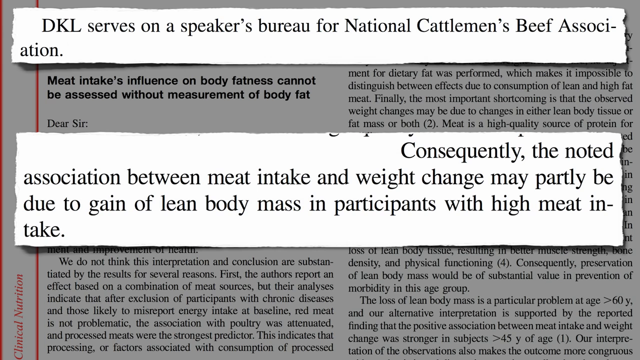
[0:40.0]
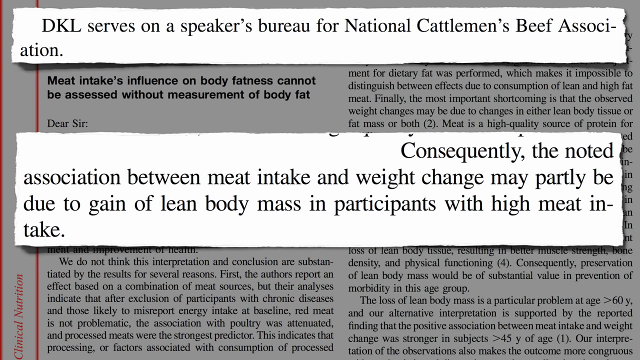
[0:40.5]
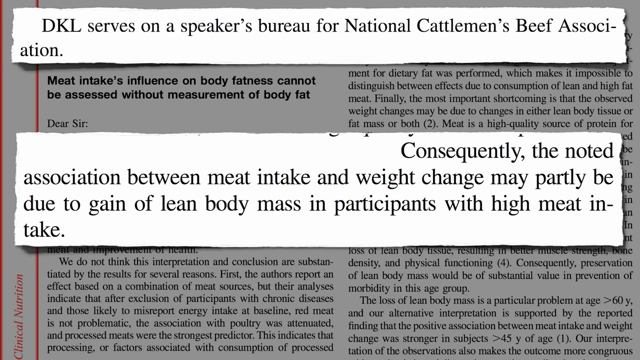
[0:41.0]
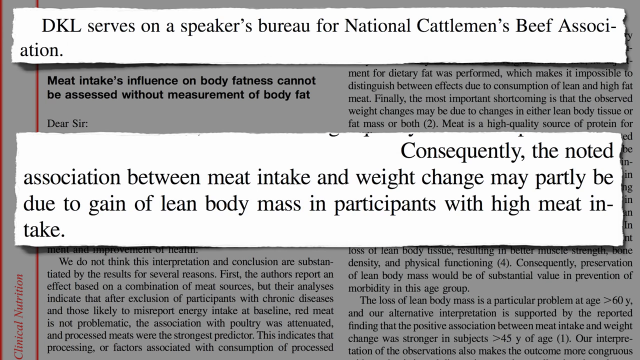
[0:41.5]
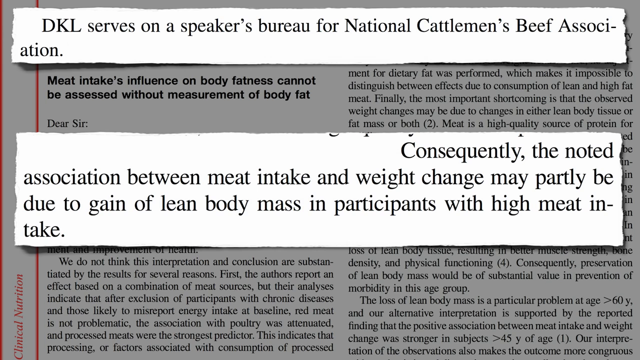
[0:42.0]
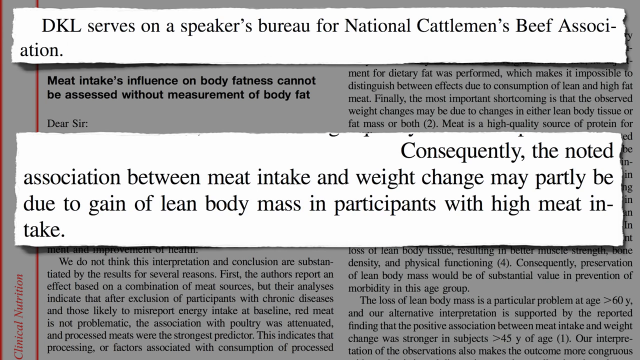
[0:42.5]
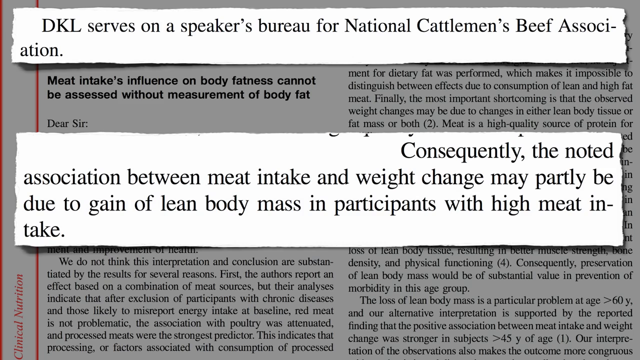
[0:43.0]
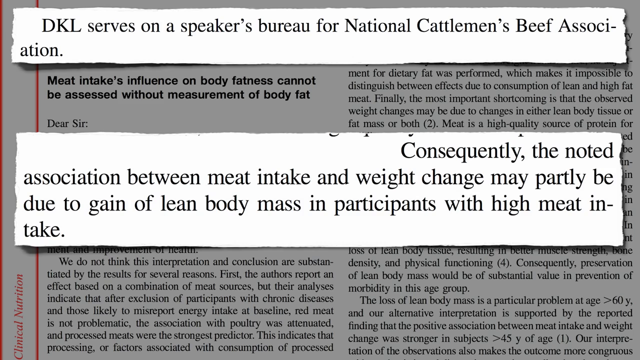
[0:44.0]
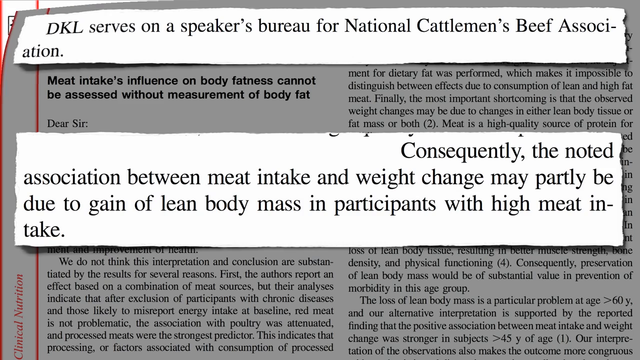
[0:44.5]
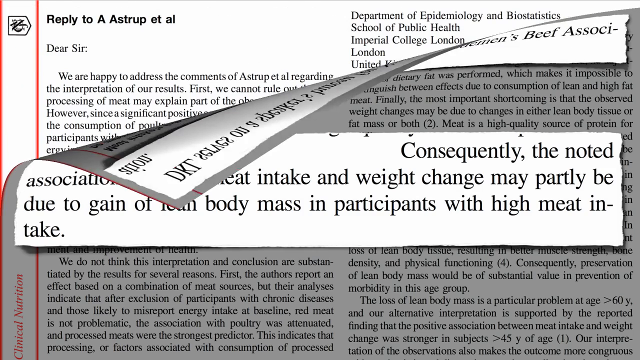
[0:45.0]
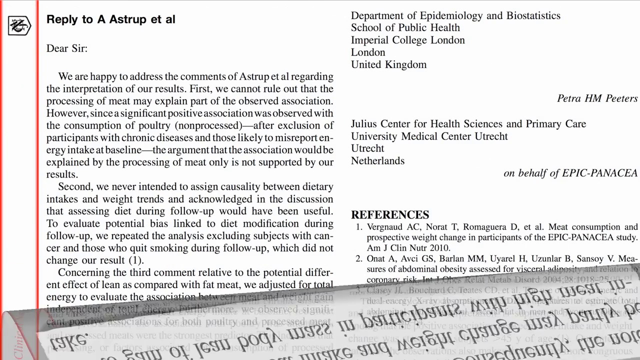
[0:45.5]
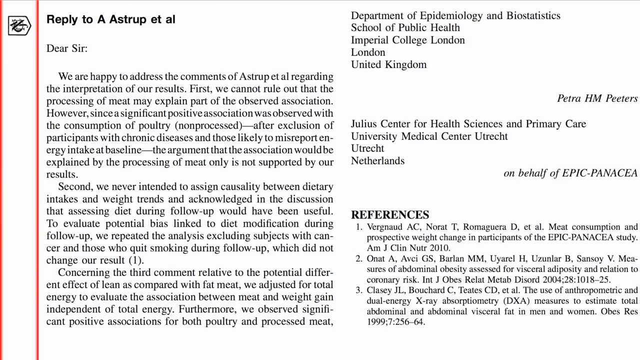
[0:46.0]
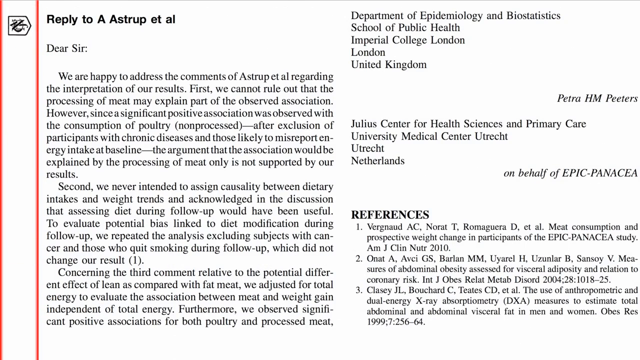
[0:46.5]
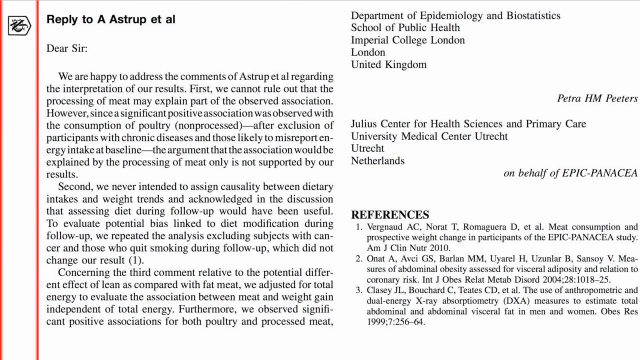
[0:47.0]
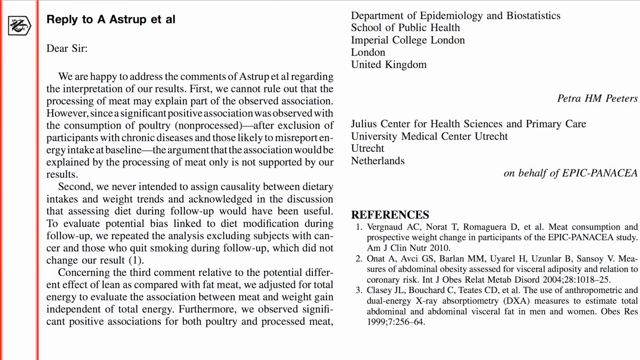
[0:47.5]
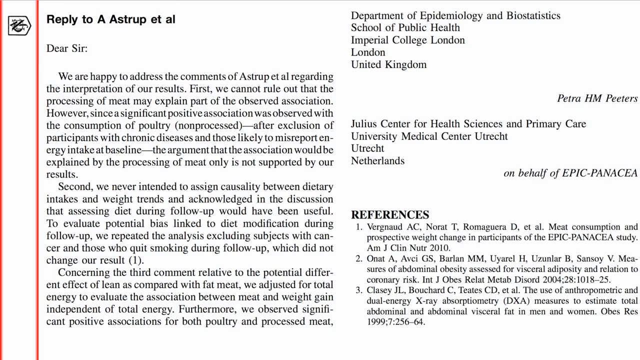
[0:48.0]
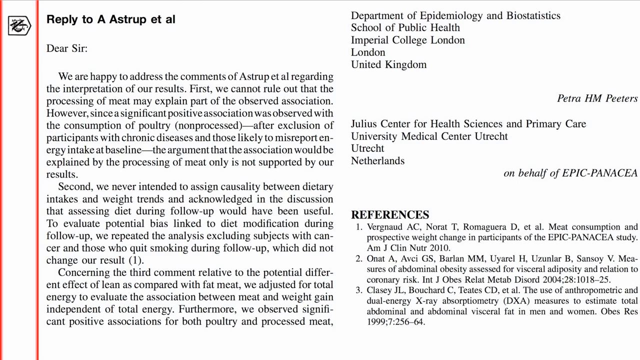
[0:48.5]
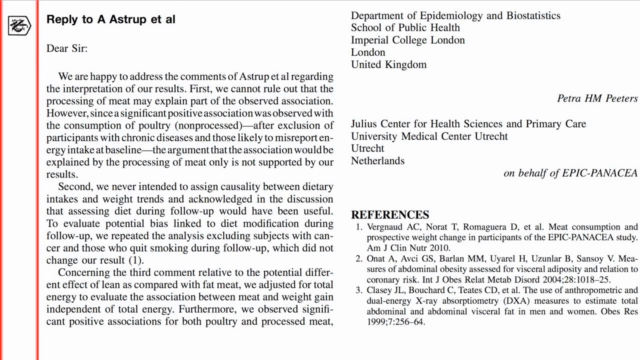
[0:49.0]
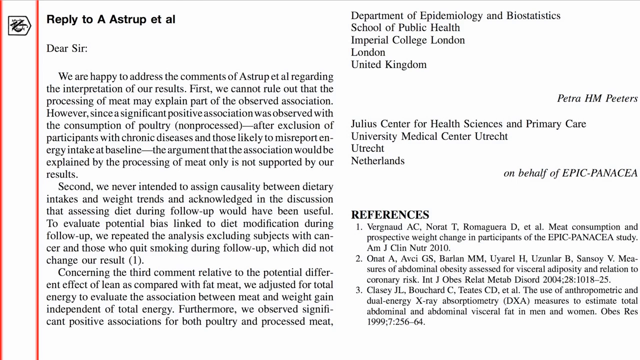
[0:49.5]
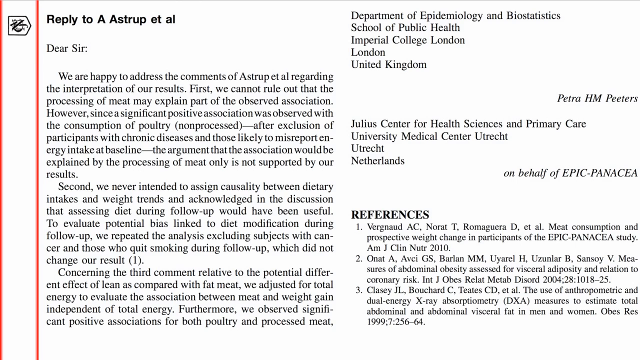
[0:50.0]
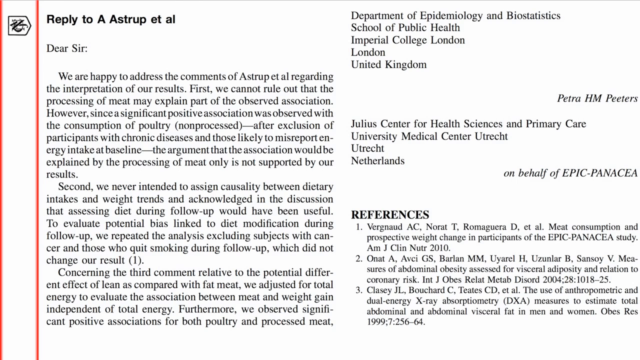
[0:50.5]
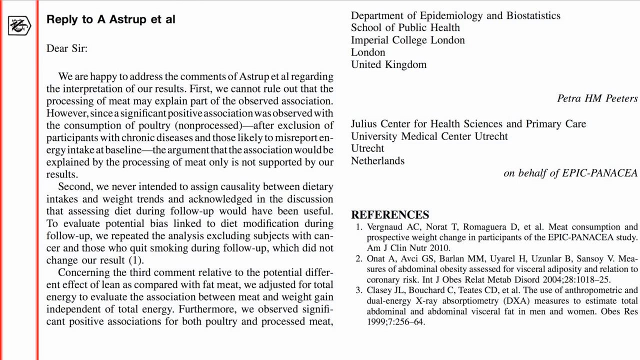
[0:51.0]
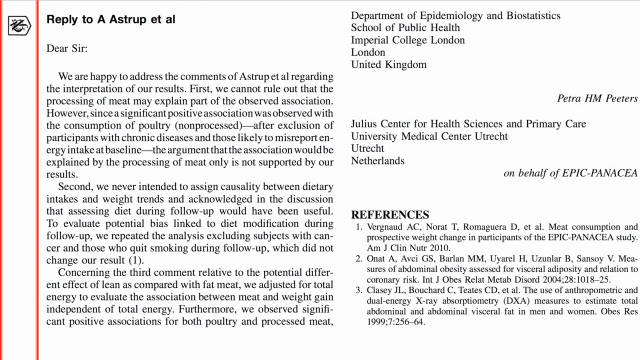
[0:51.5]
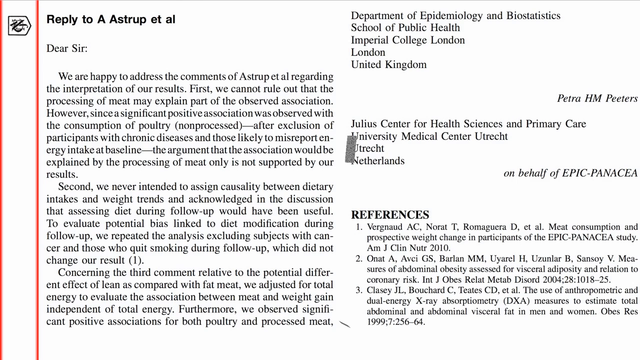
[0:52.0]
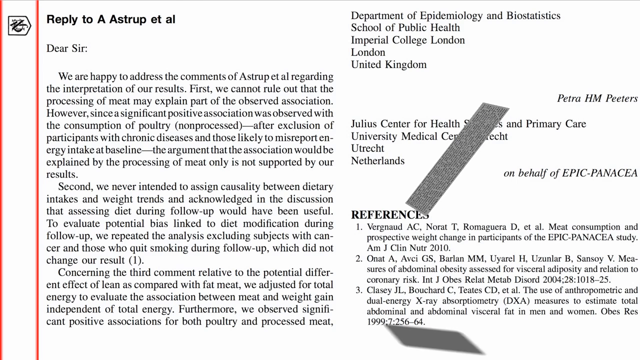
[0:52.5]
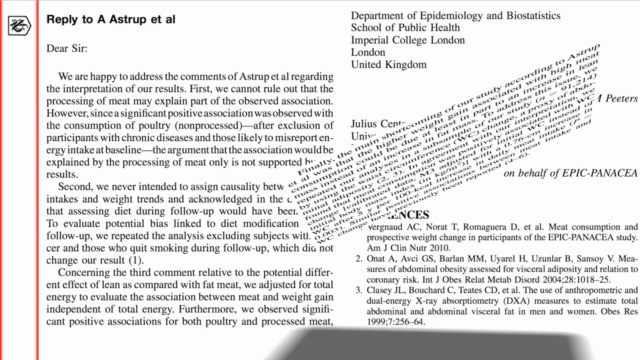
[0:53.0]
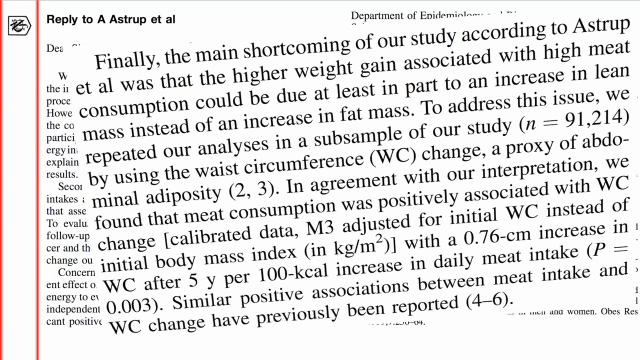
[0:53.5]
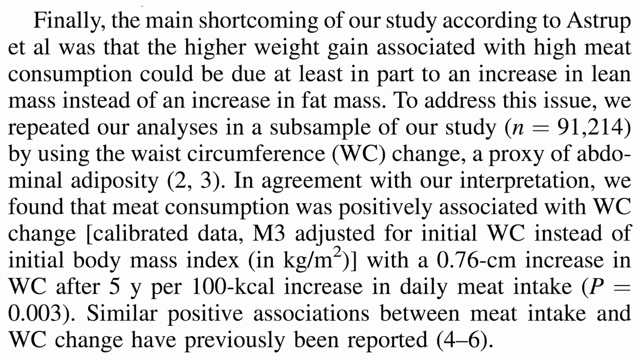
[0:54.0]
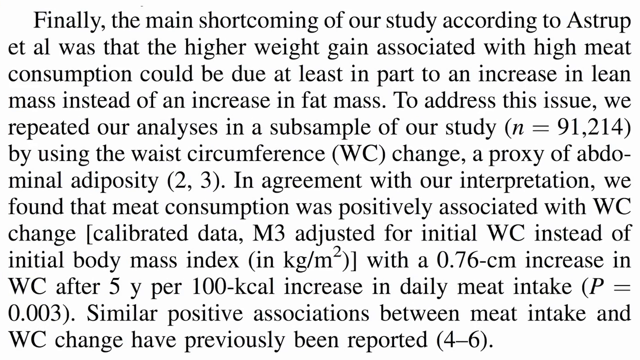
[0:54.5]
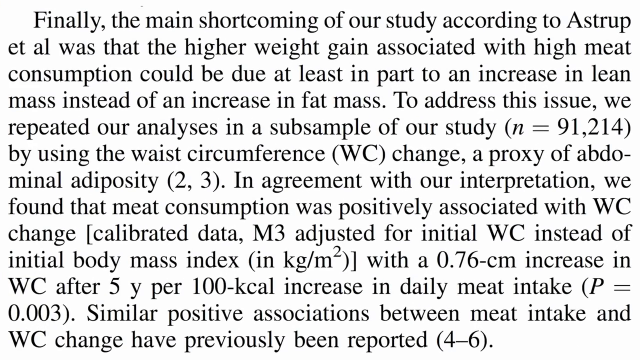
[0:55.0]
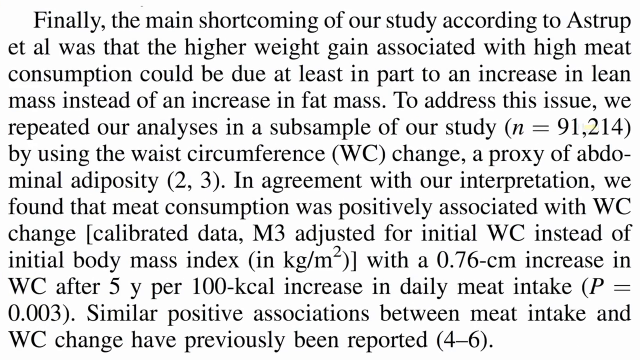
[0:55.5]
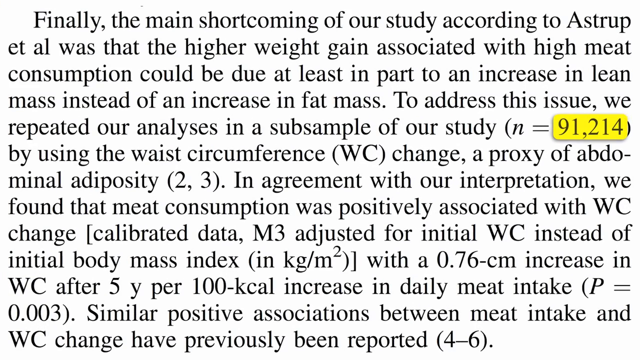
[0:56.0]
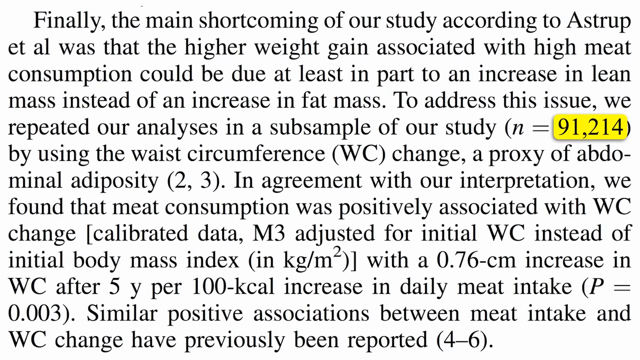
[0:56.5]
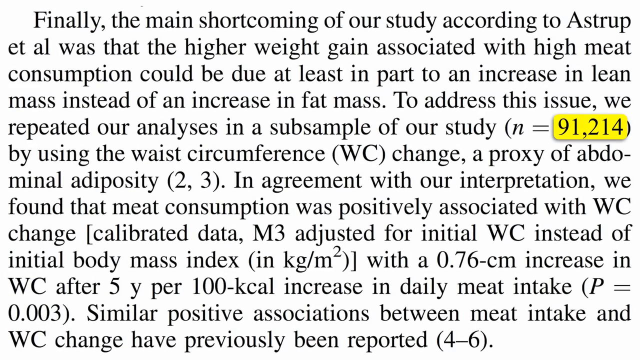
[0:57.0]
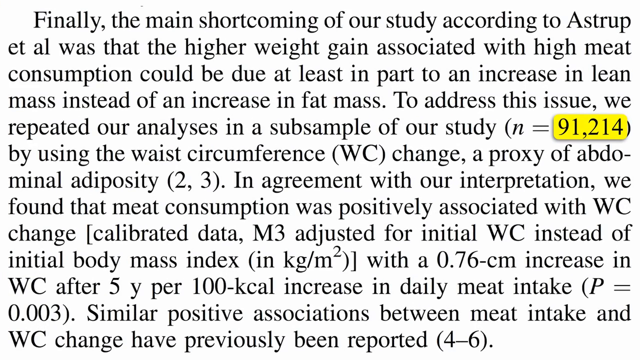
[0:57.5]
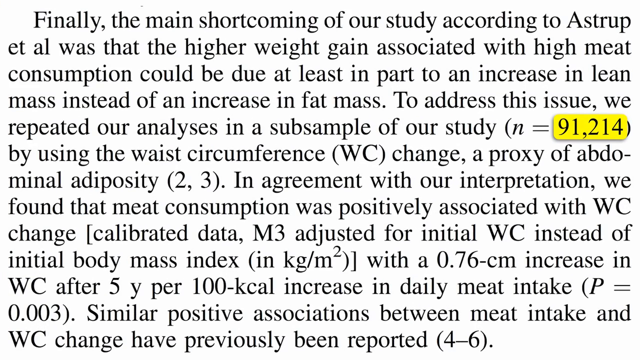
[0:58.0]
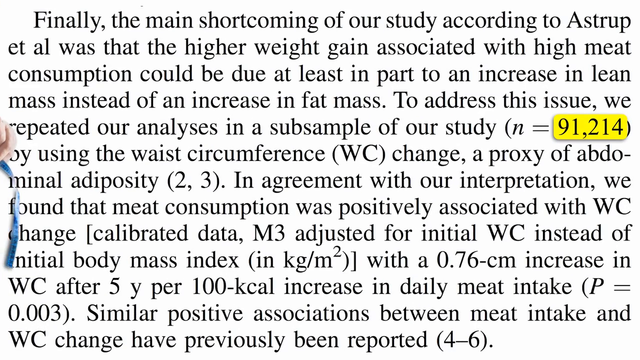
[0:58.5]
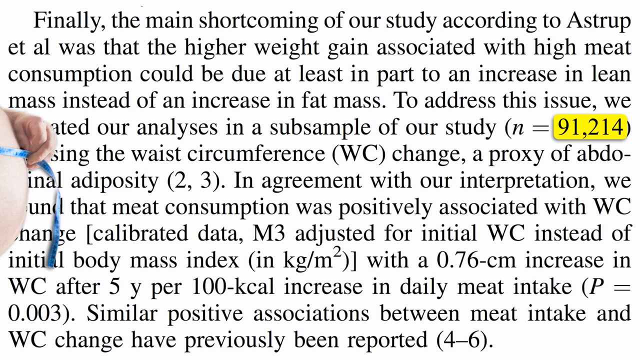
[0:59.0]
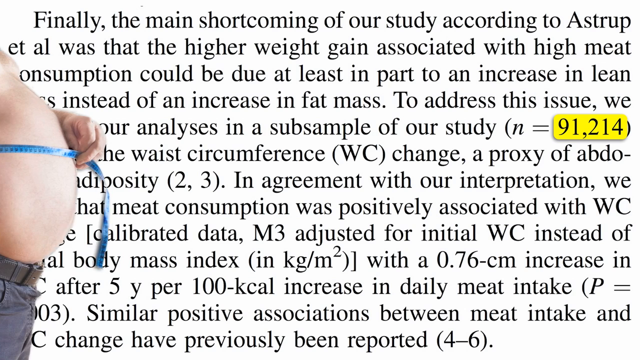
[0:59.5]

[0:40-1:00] An article from some publication in black and white print is shown. The page peels downward, starting with the upper left corner, revealing another clipping that looks academic and references Imperial College London, United Kingdom, apparently a scientific article. The image lingers on the article, and then a box twirls and spins out of the middle of it toward the viewer, becoming a large blown-up blurb, presumably from this article or another one. In black and white print it reads "finally the main shortcomings of our study according to Arstrup et al was that the higher weight gain associated with high meat consumption".